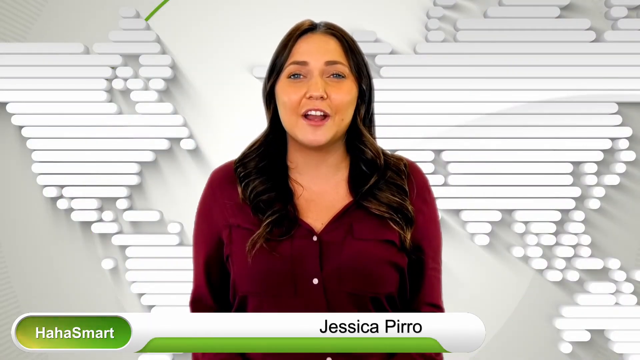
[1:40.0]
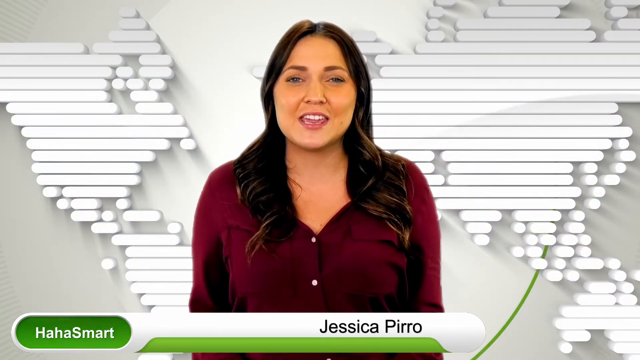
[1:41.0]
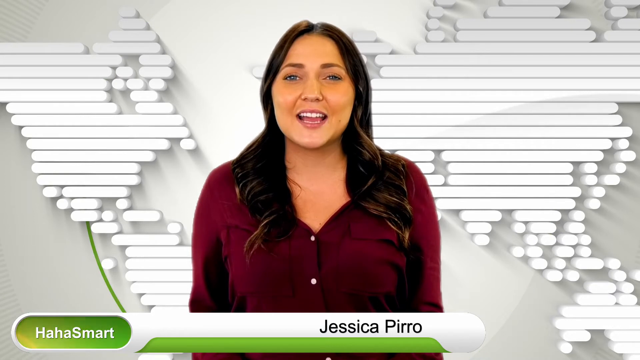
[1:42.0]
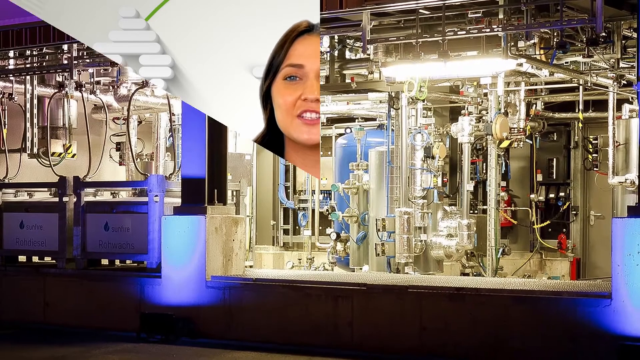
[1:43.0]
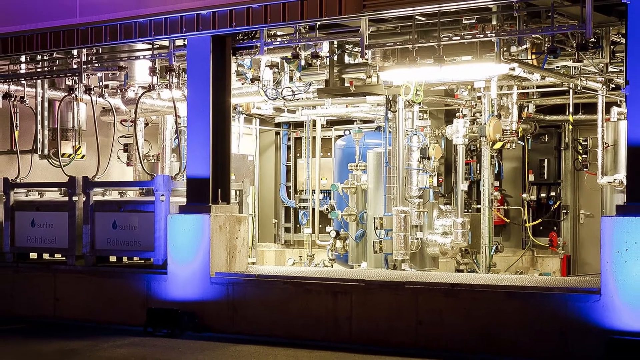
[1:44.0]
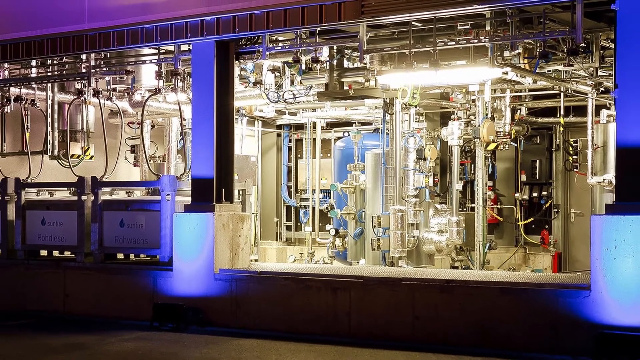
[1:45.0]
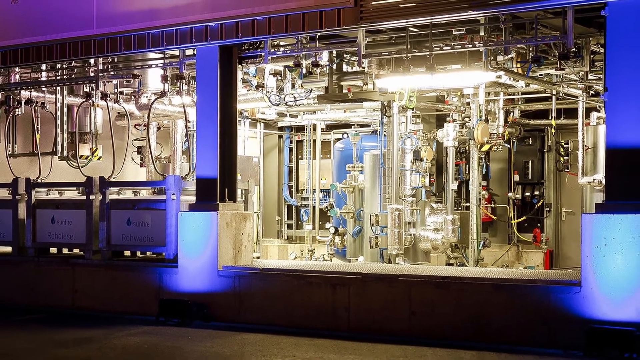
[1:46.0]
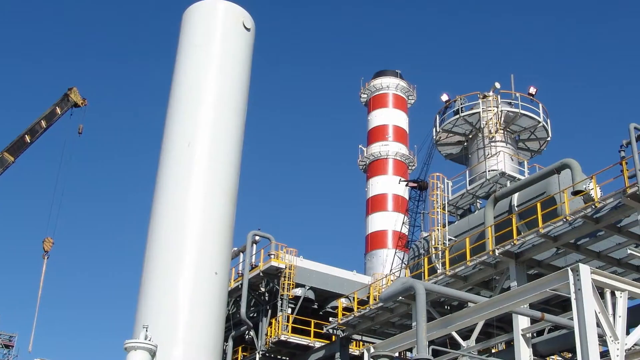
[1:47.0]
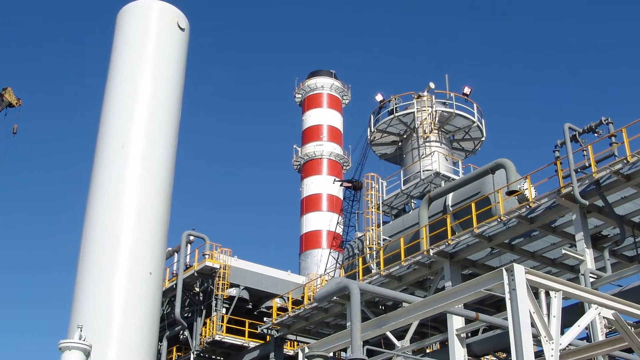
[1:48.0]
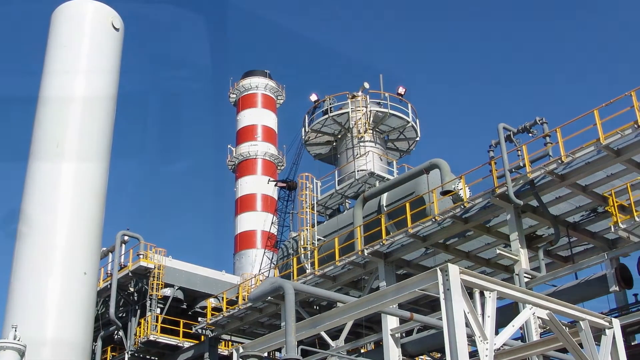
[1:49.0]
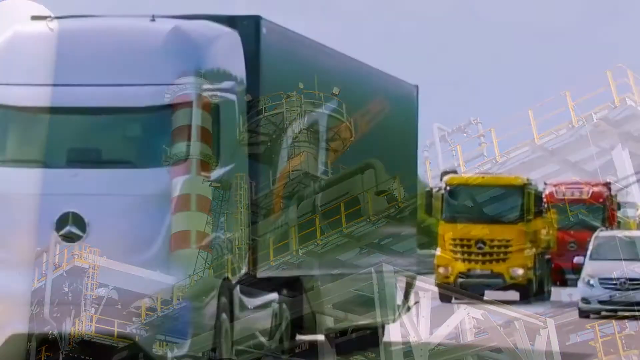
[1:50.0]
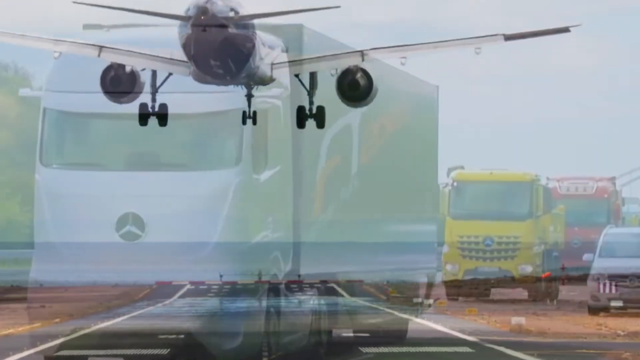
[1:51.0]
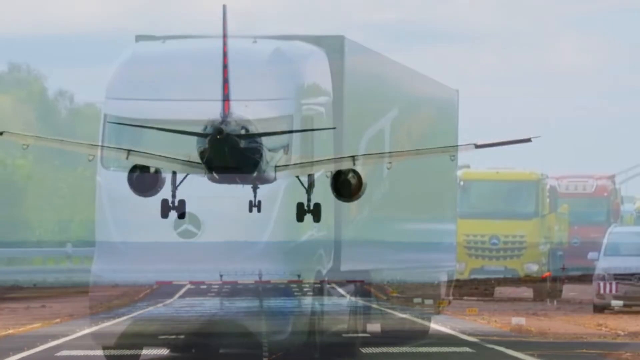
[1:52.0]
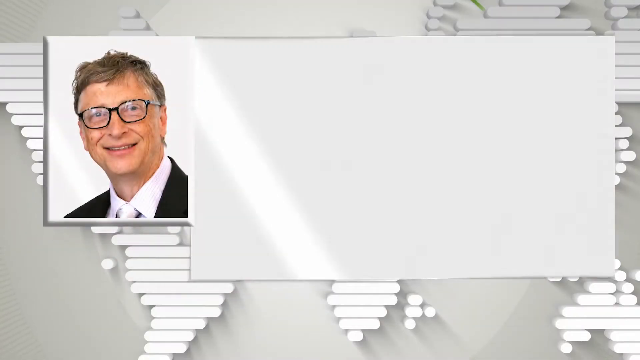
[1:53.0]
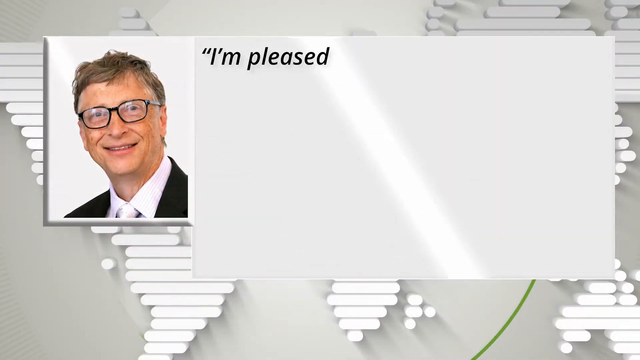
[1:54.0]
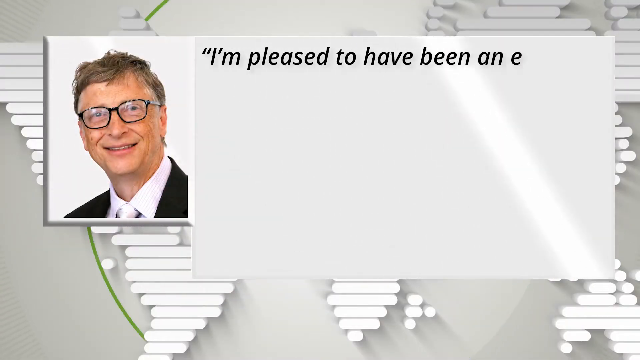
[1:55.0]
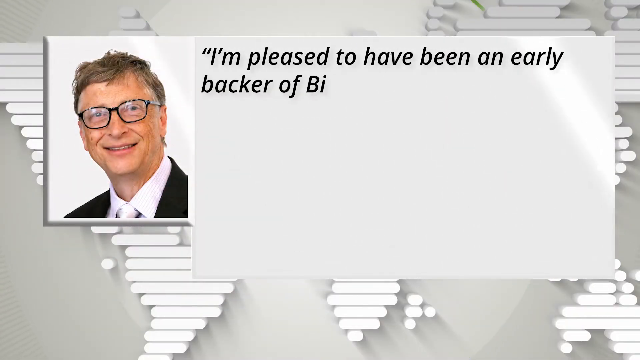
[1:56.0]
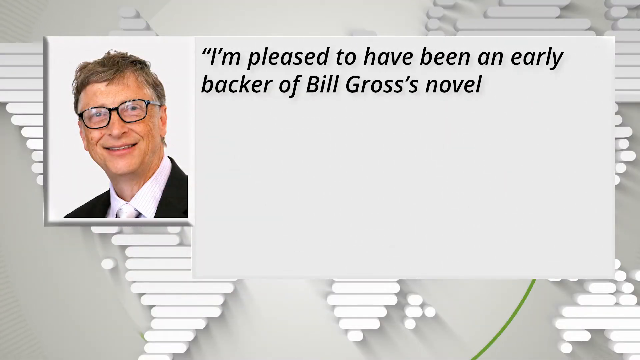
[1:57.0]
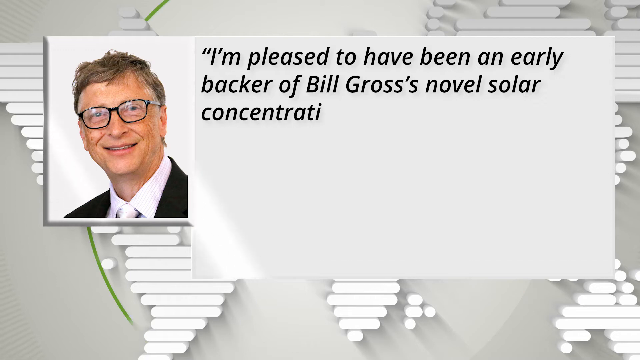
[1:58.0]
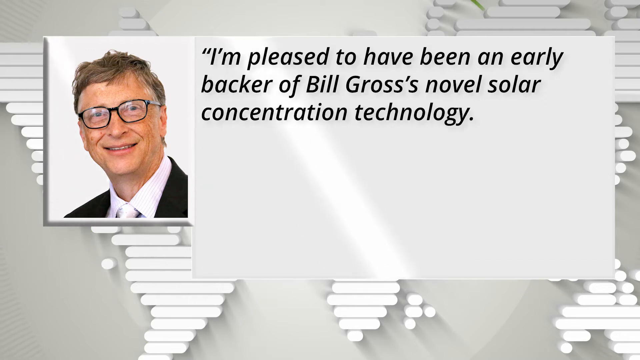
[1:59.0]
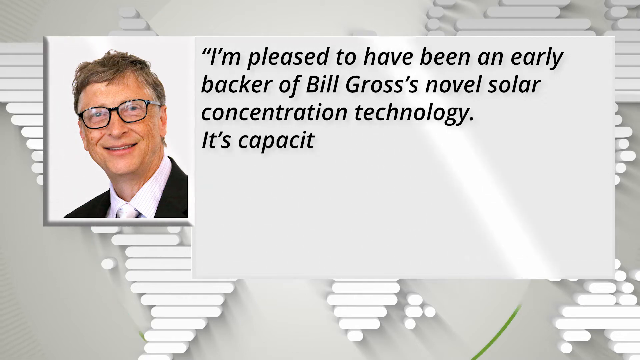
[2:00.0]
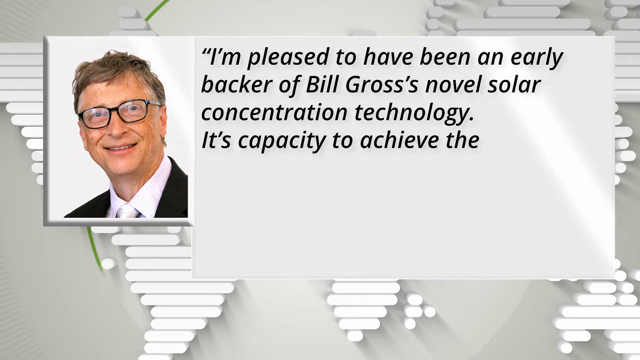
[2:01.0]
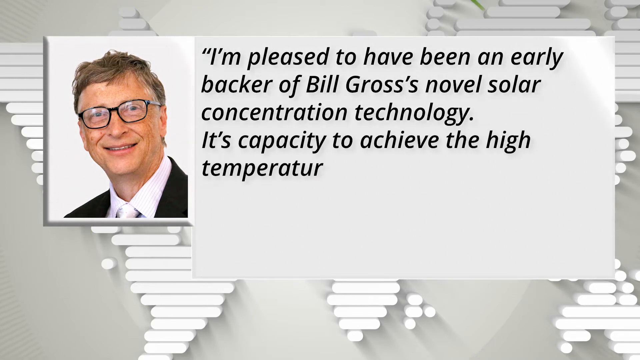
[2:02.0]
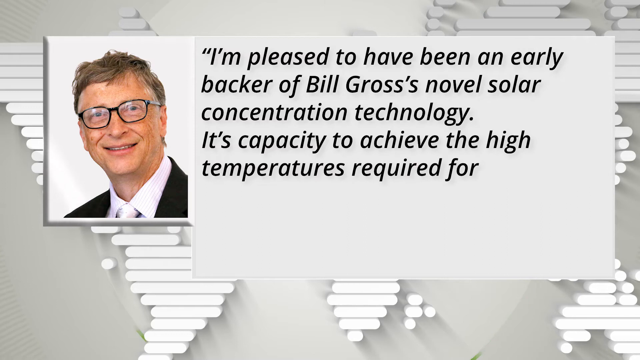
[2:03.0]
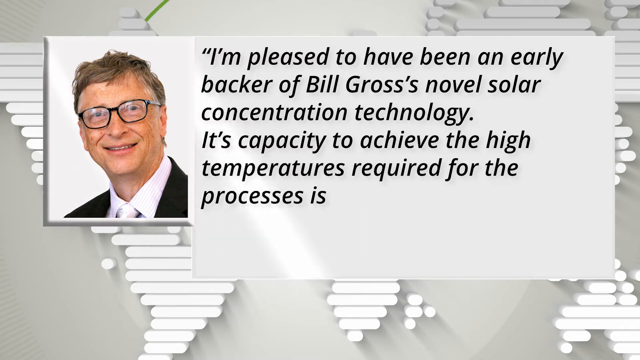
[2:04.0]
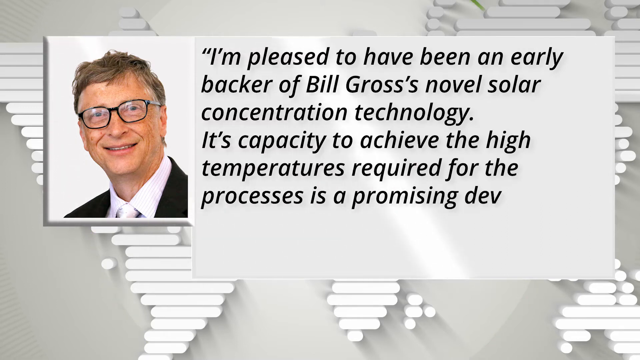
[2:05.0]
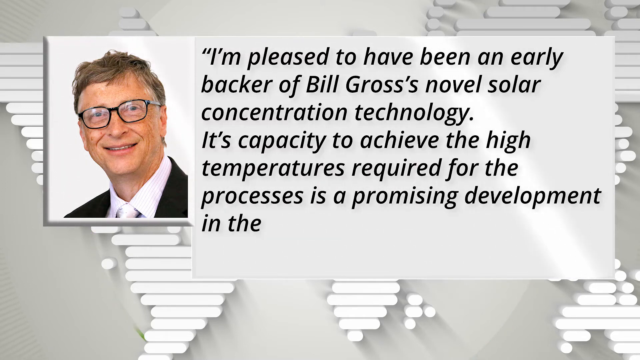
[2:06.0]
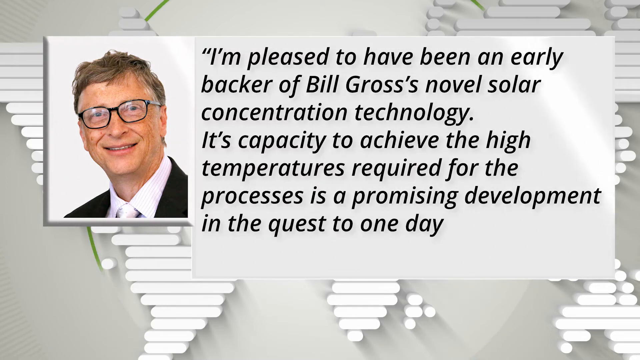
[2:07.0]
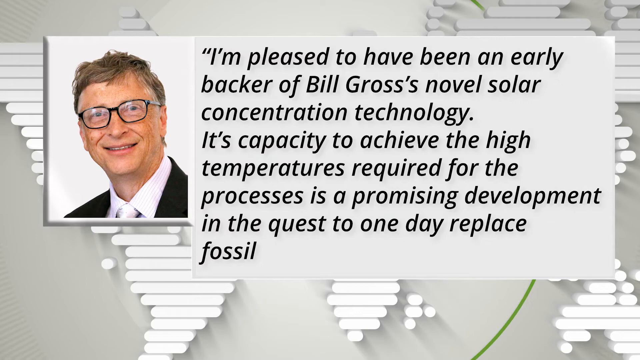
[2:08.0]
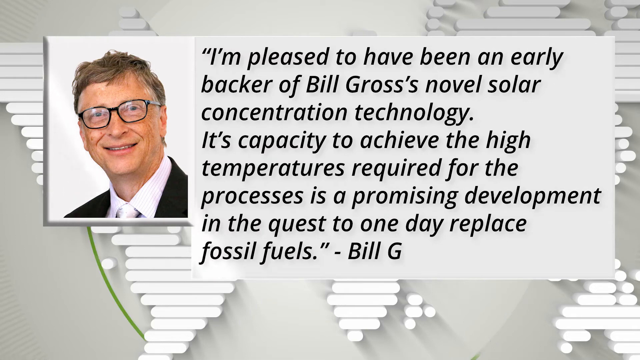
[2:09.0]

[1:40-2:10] A factory is shown with pollution constantly coming out of it.